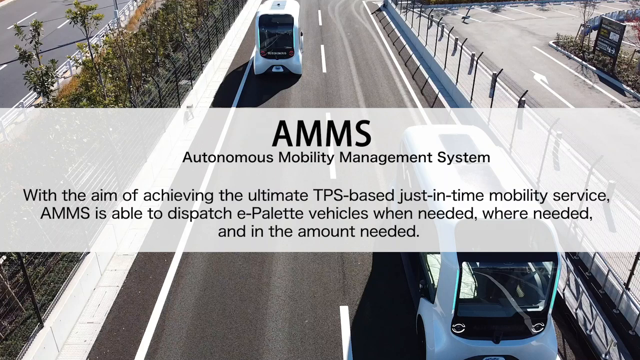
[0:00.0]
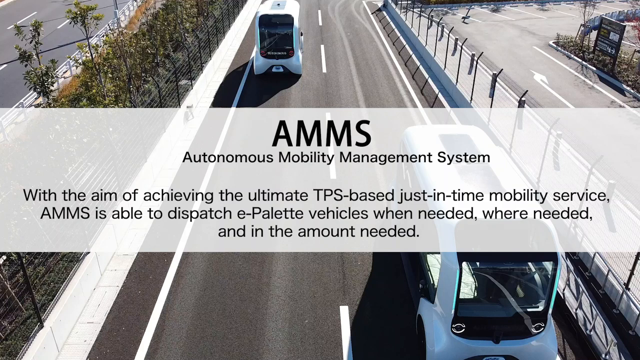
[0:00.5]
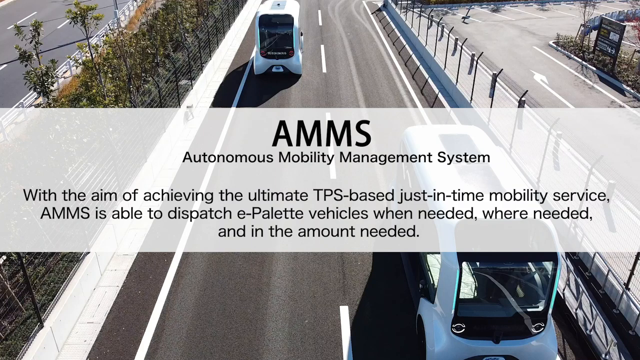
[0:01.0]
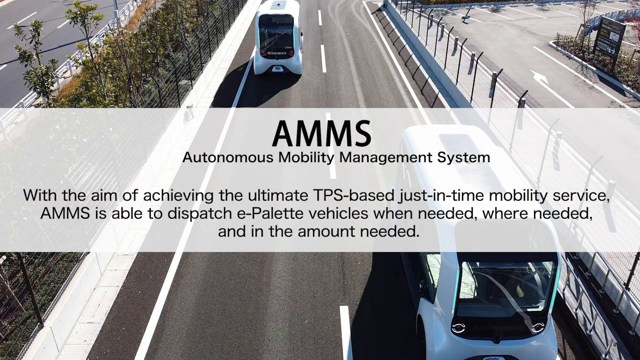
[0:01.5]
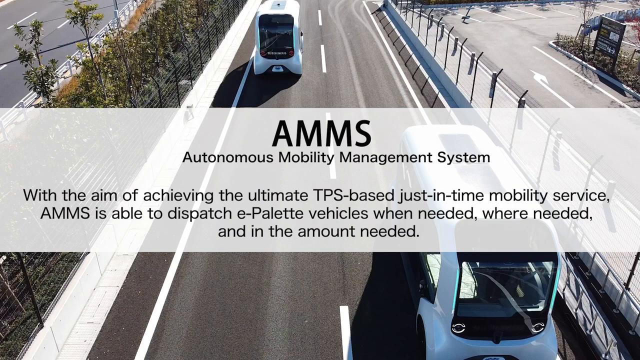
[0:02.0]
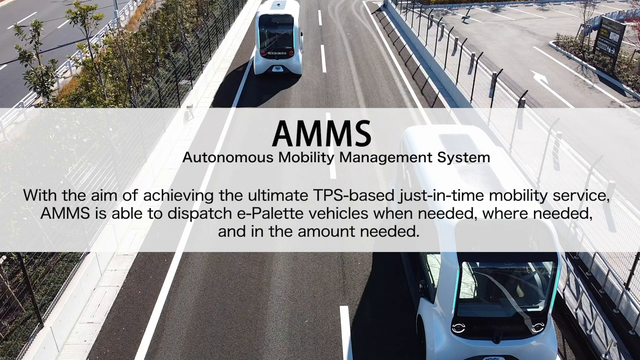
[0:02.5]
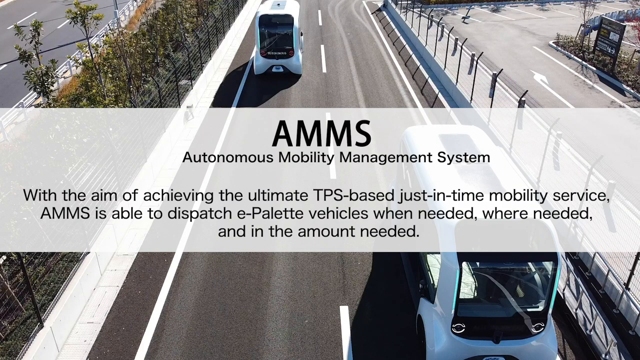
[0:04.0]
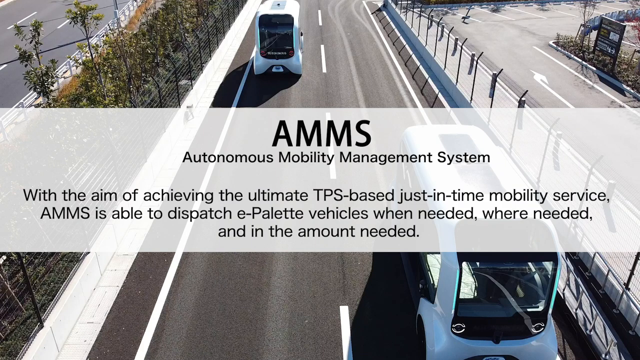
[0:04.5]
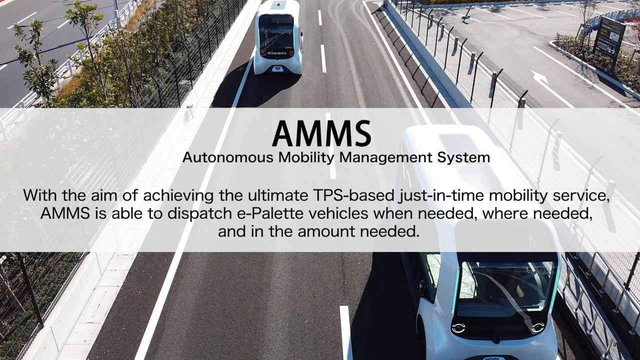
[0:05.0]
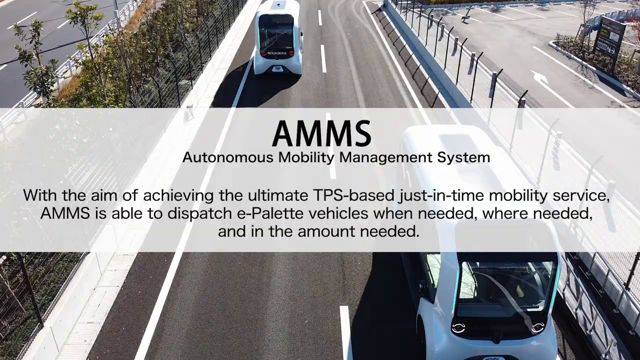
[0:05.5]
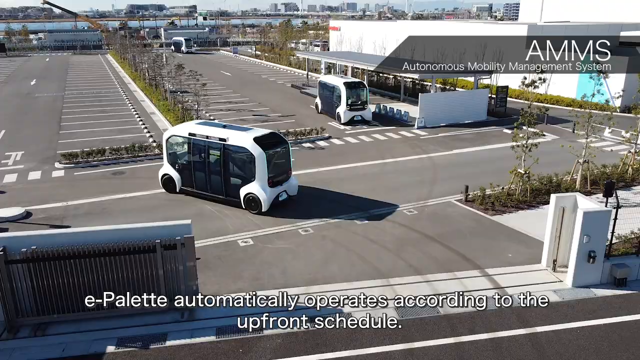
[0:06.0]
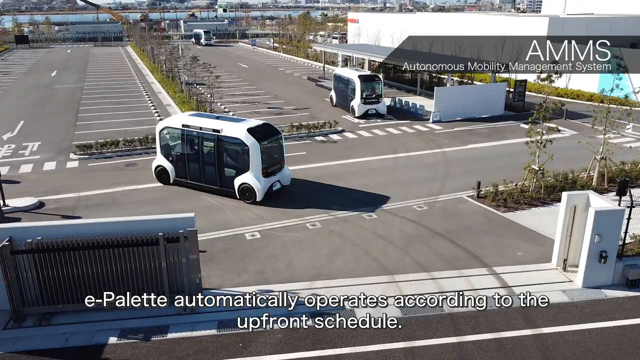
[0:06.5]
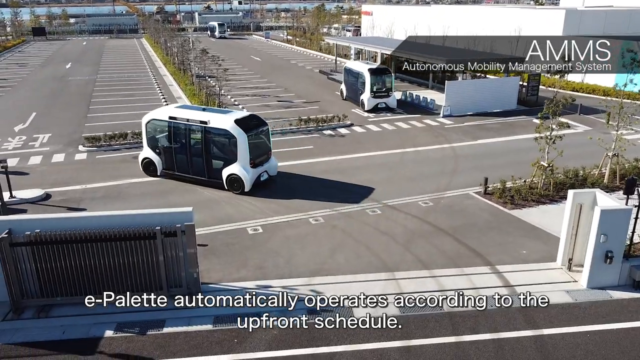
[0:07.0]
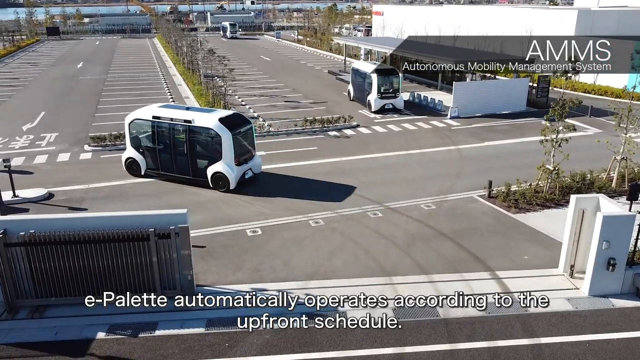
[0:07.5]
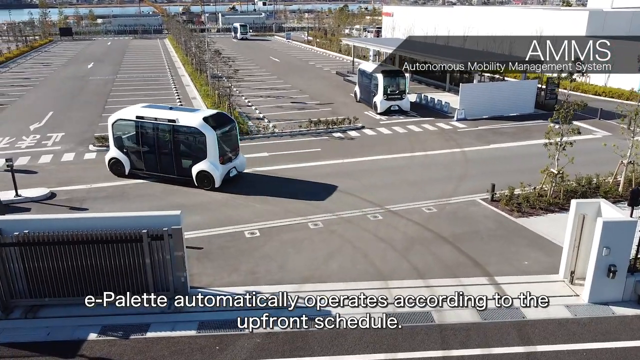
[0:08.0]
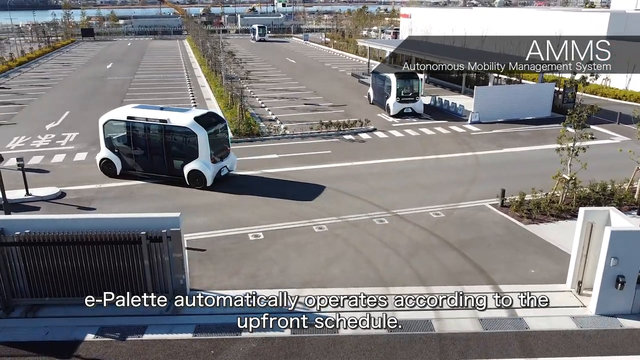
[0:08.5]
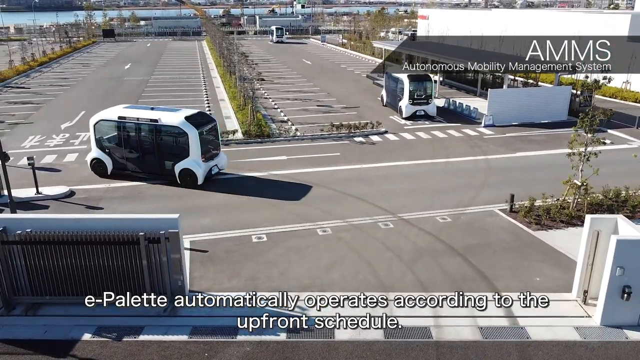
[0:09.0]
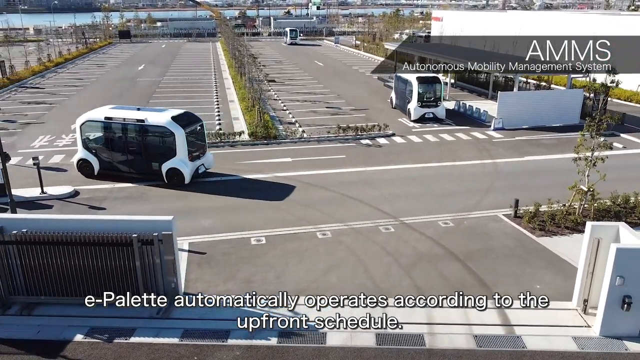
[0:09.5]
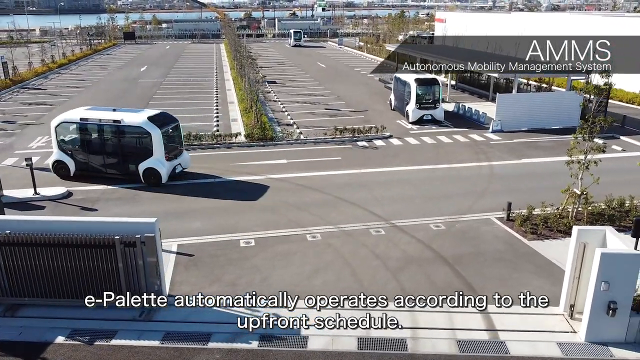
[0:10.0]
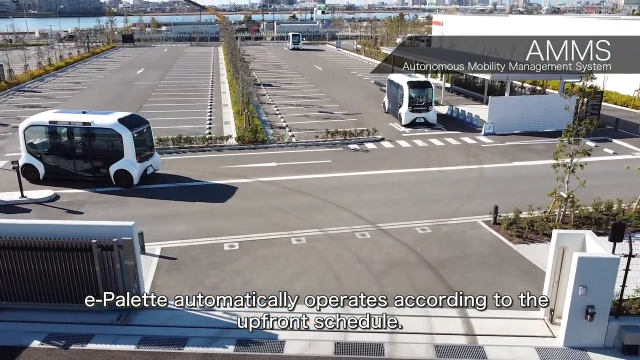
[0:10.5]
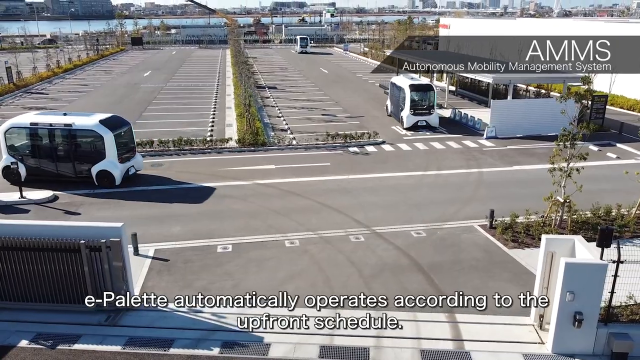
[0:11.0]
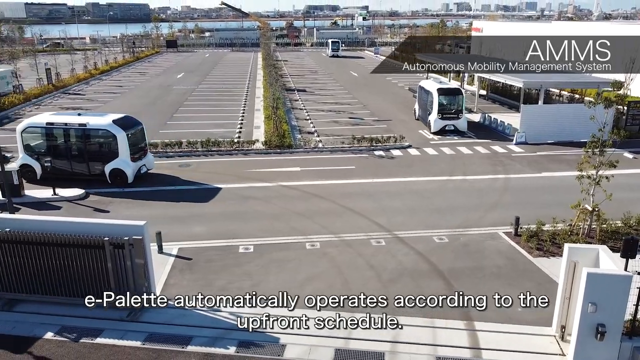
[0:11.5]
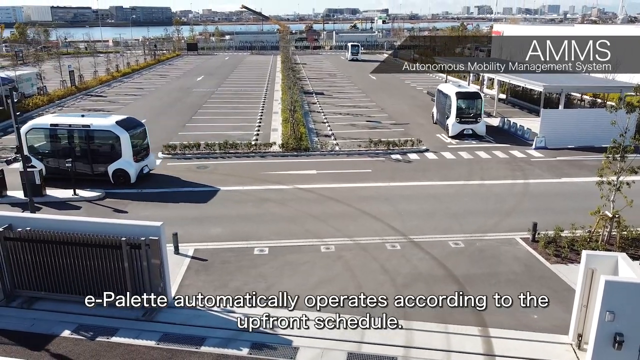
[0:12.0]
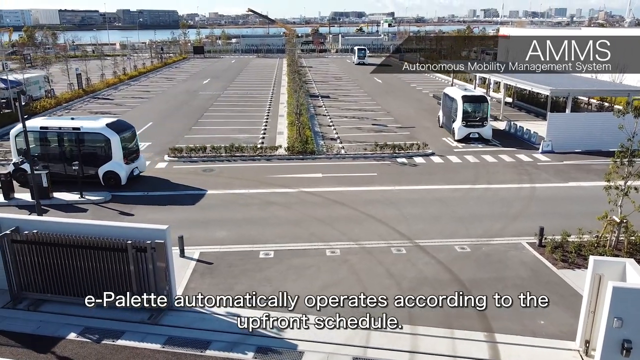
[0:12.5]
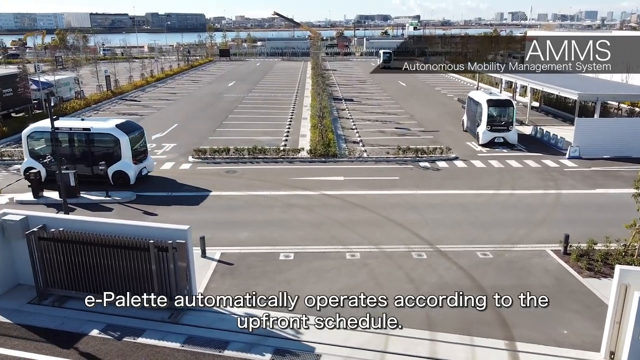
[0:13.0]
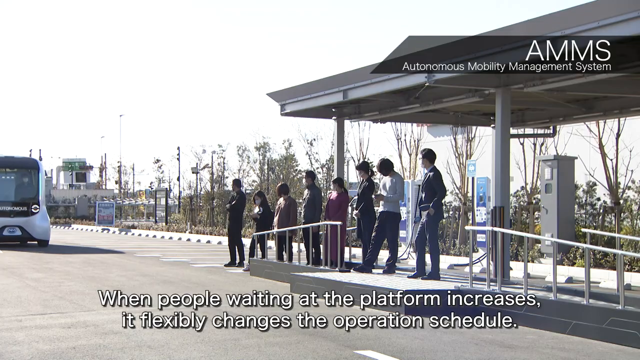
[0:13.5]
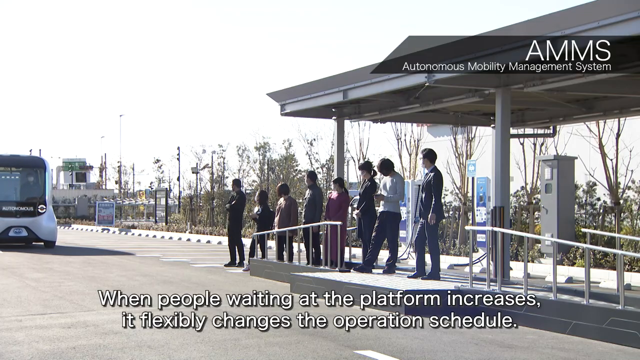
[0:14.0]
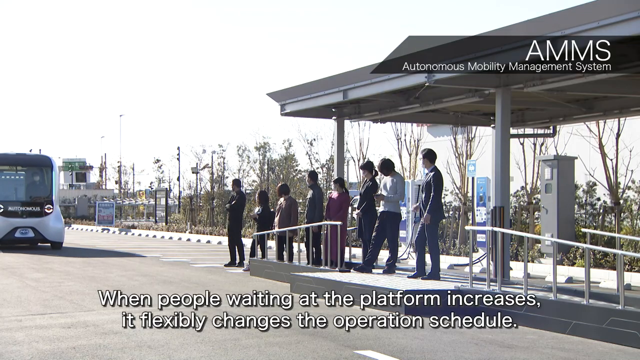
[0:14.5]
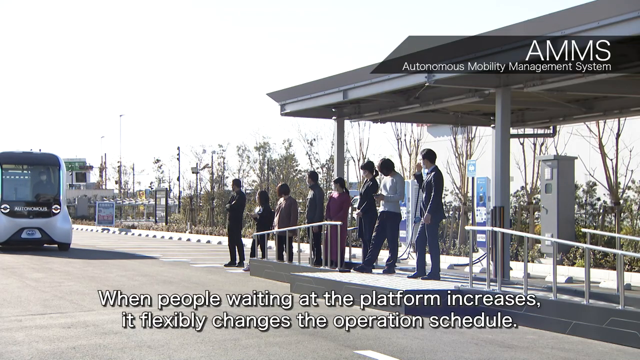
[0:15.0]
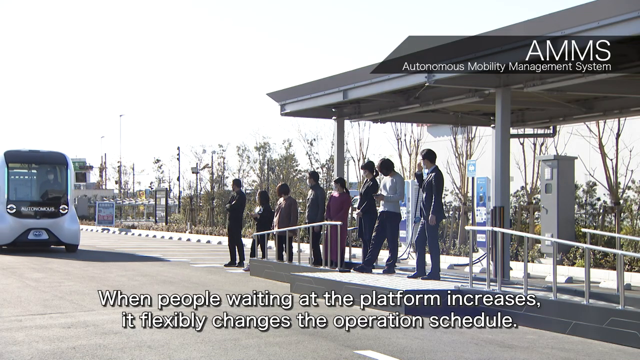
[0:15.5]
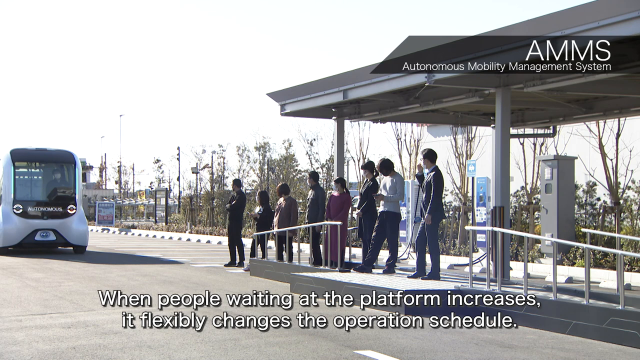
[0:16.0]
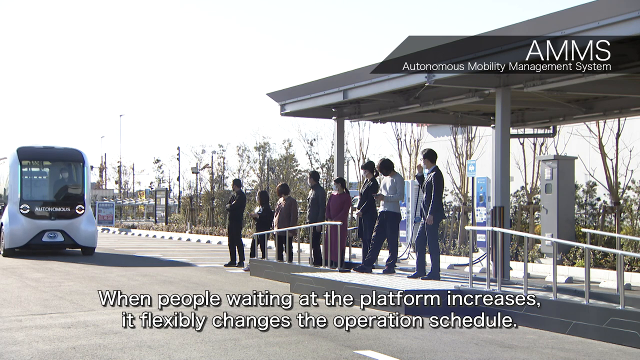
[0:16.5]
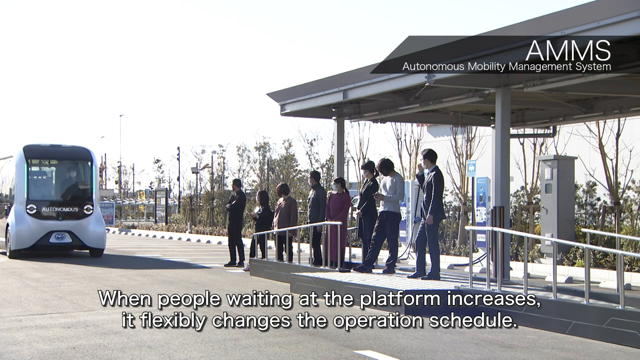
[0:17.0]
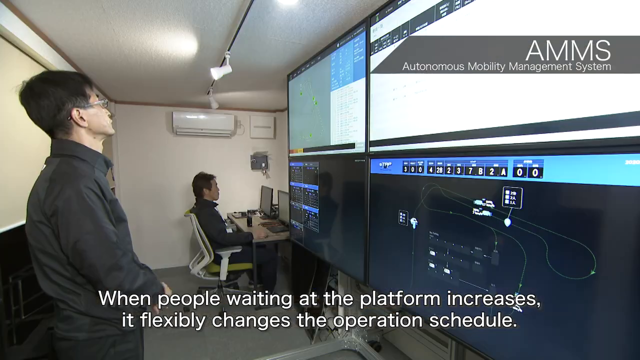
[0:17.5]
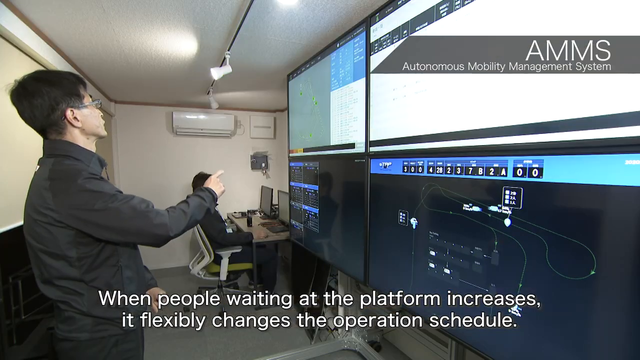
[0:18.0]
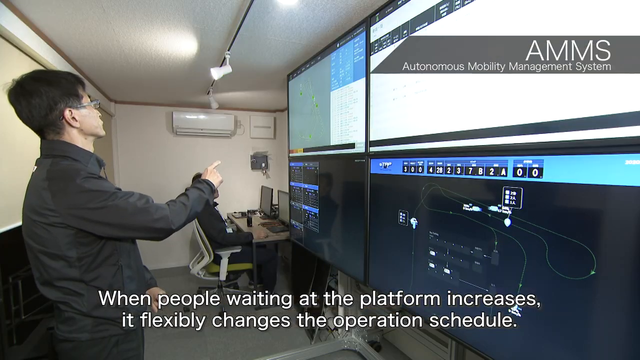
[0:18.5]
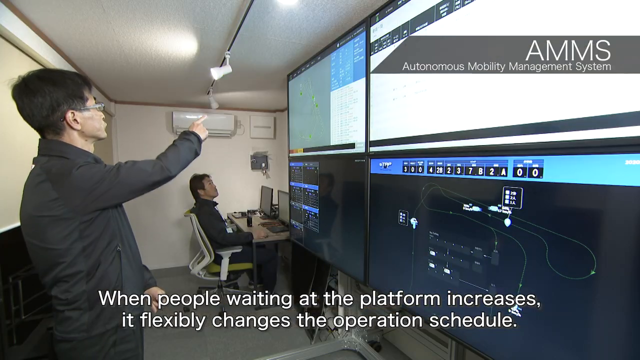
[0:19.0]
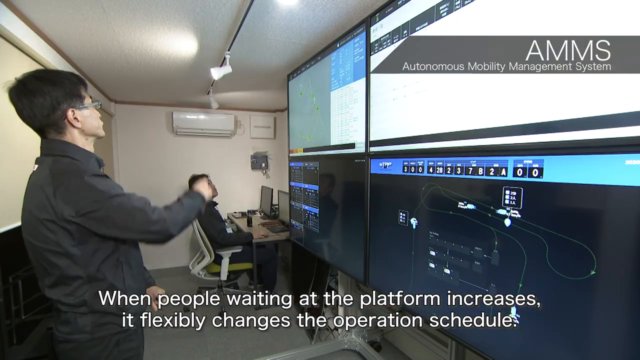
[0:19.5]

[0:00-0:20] The video opens on an image of a couple of buses driving down a road. The buses look a bit futuristic, with a modern look and feel. Over the image is a translucent white banner with black text reading "AMMS, Autonomous Mobility Management System." The text continues with "achieving the ultimate TPS-based, just-in-time mobility service, AMMS is able to dispatch e-palette vehicles when needed, where needed, and the amount needed." Next, the whole bus is visible as it drives through what looks to be a parking lot. The bus pulls up to a bus station where people are waiting on a platform, while captions mention changes to the operation schedule and how it is flexible. Two men then appear inside a room, seemingly looking at different screens.